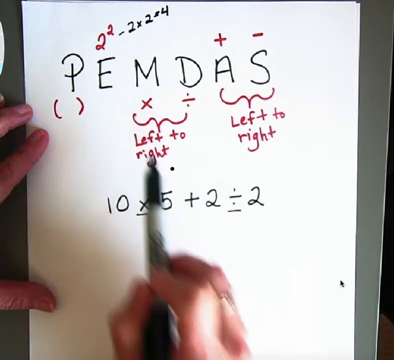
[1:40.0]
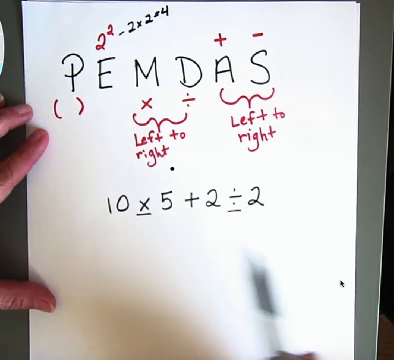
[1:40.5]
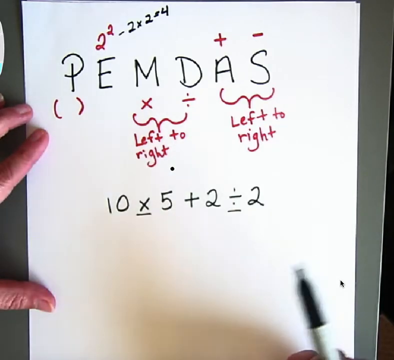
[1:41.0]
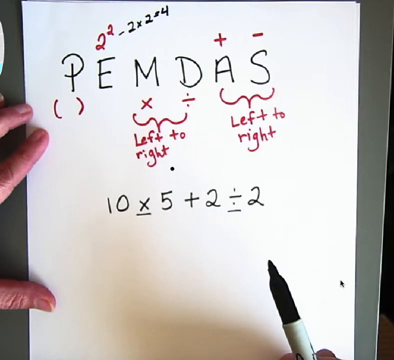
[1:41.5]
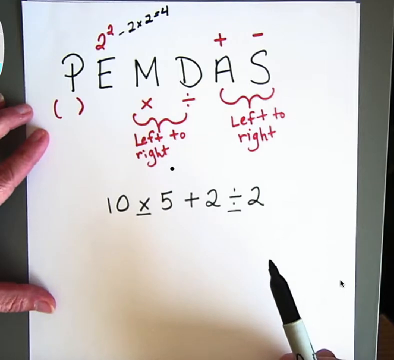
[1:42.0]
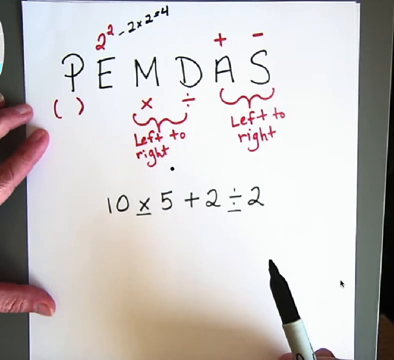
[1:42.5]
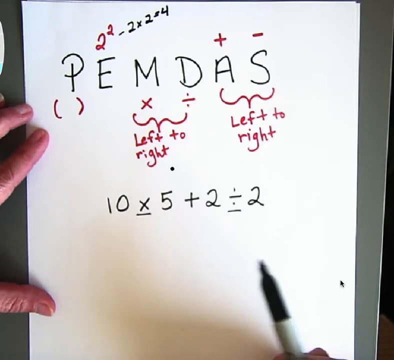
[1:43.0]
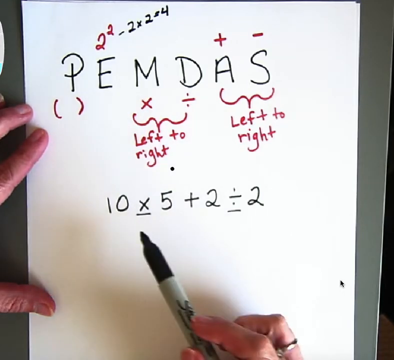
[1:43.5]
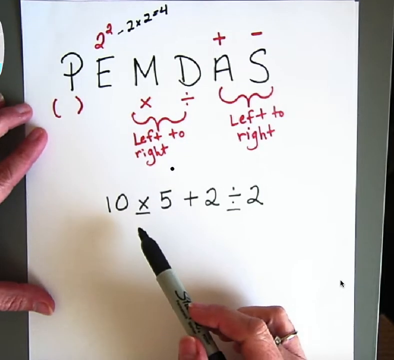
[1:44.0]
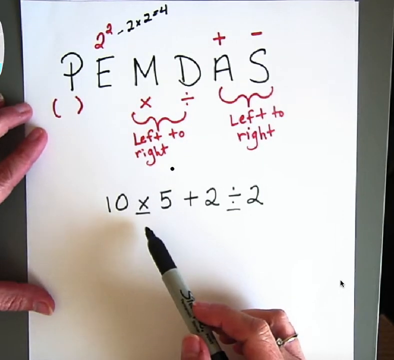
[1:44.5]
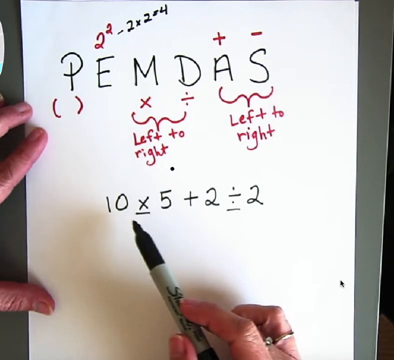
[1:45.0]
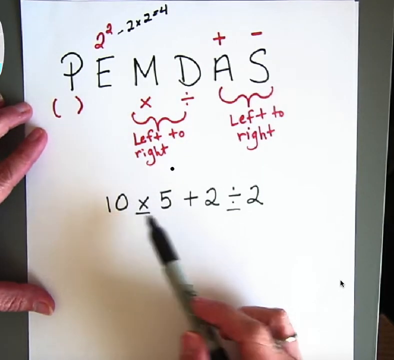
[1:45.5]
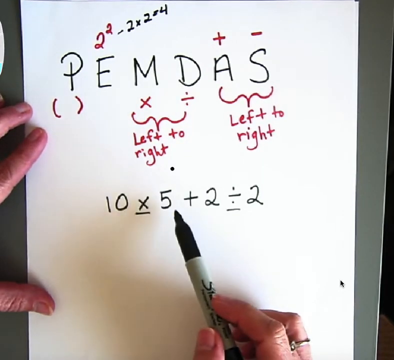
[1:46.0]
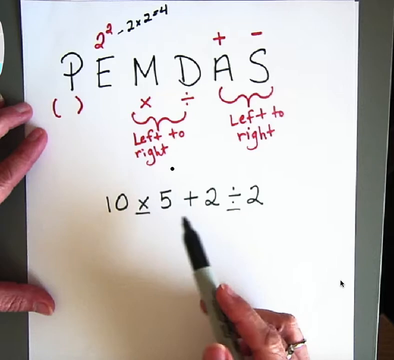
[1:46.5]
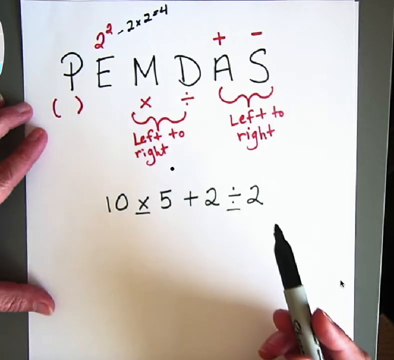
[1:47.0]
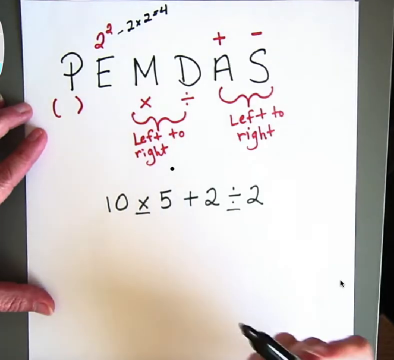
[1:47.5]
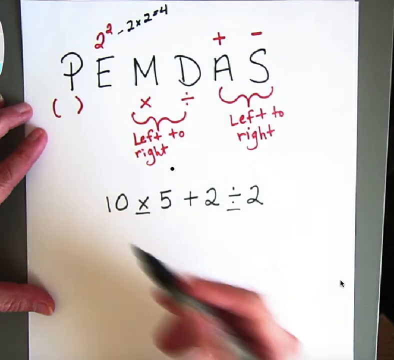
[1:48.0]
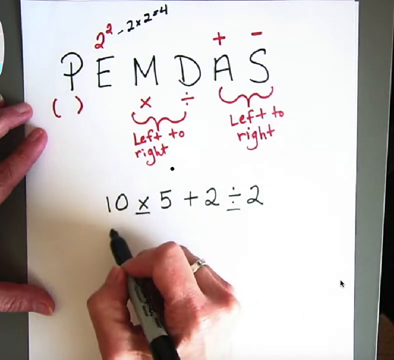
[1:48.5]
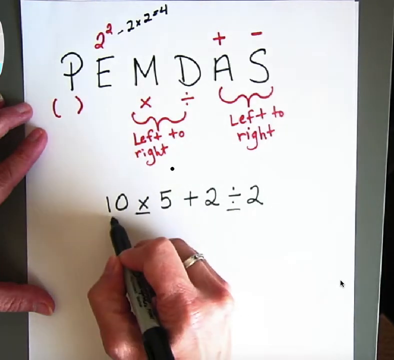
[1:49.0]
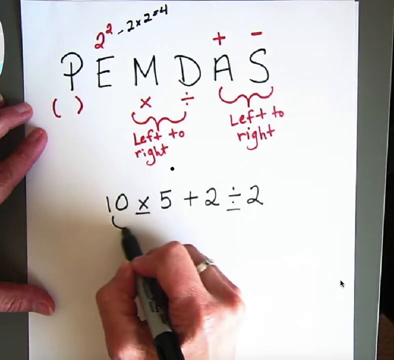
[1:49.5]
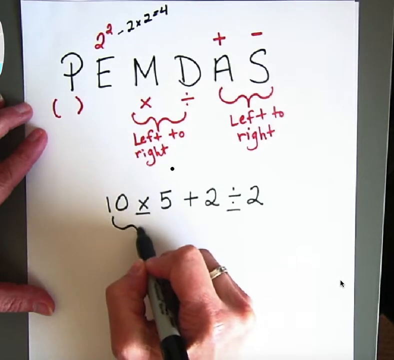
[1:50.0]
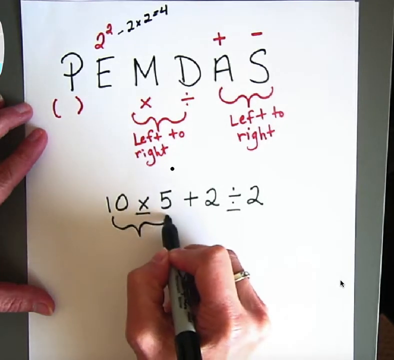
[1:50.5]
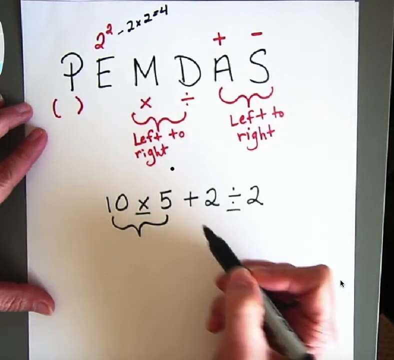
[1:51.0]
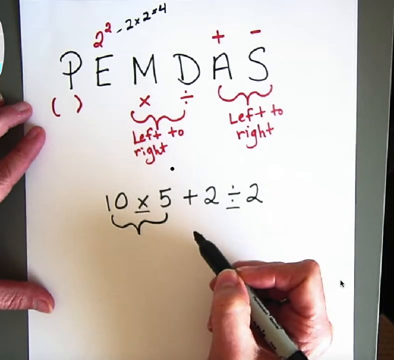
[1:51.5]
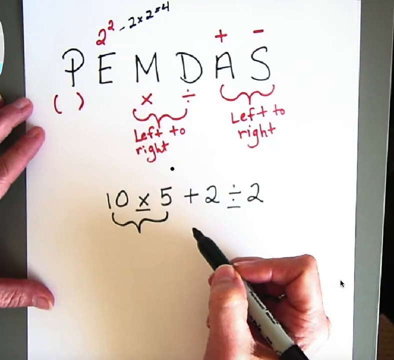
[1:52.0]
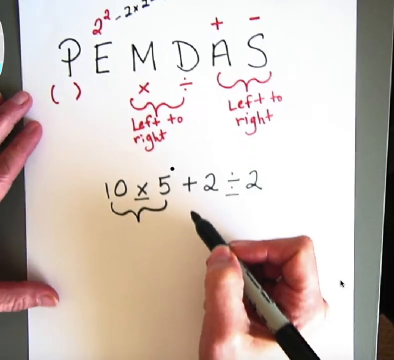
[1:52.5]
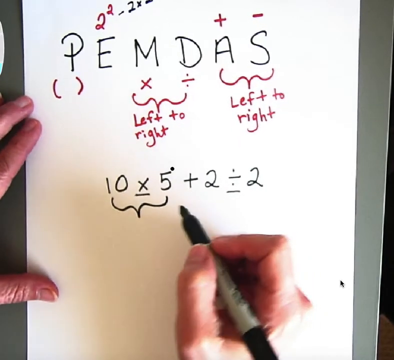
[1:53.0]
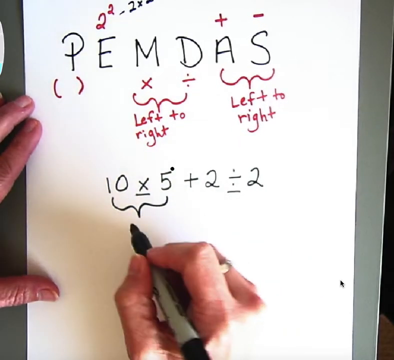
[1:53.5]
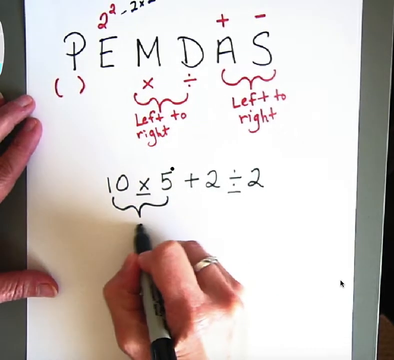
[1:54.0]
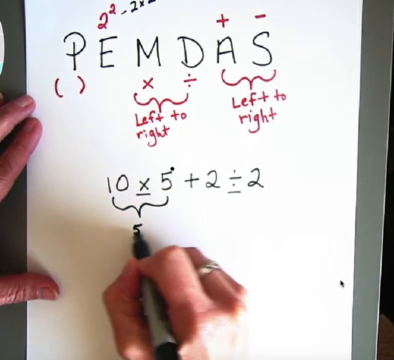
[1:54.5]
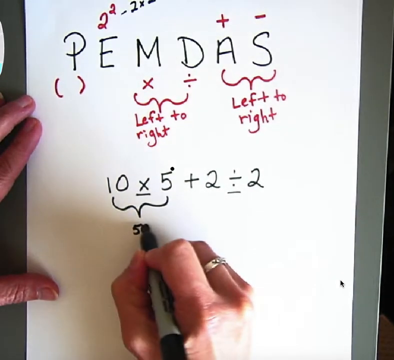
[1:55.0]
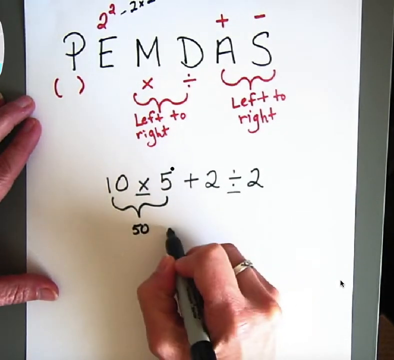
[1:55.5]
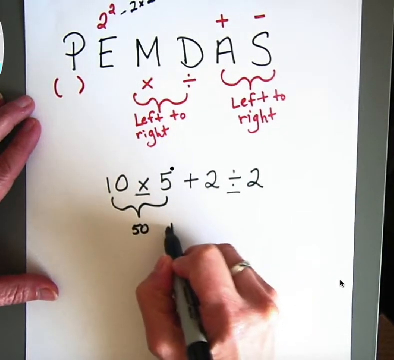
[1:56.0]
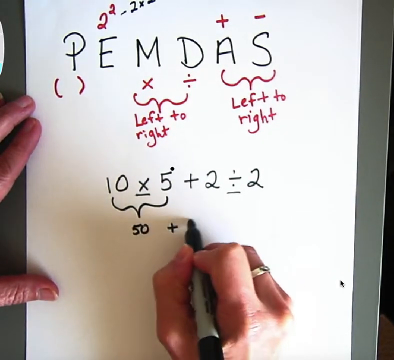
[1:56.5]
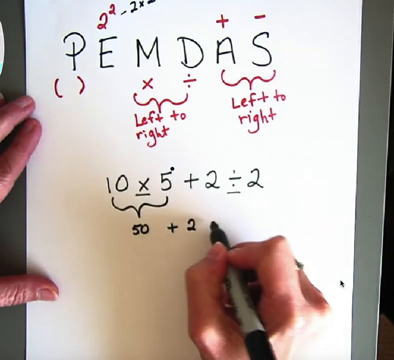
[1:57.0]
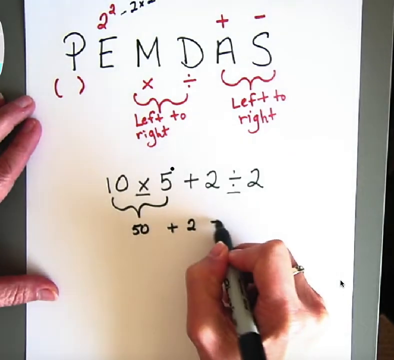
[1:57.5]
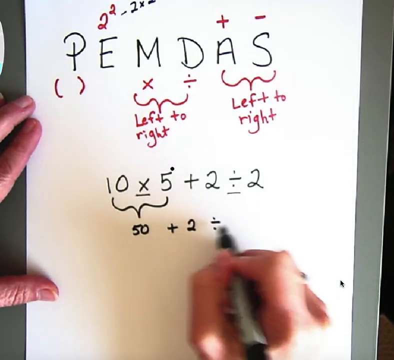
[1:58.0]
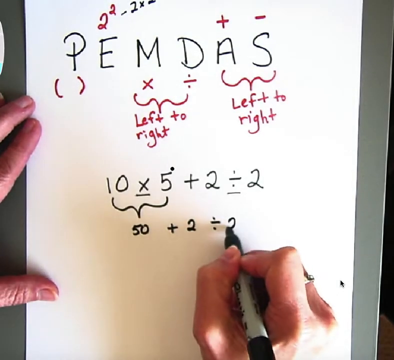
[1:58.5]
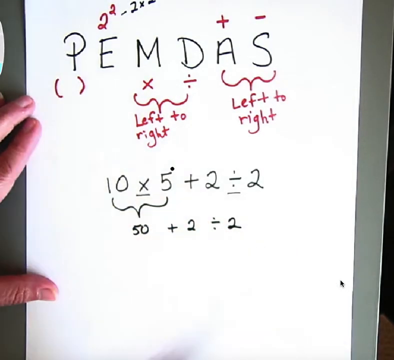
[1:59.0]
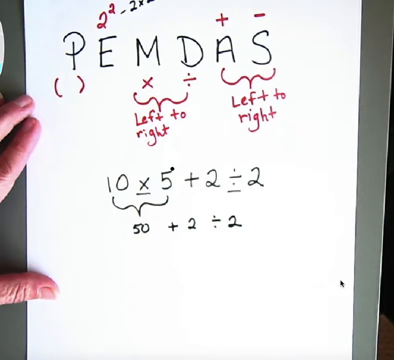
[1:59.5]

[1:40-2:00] A white piece of paper has "PEMDAS" written in black ink in capital letters spaced apart from each other. Under the P is a red parenthesis, under the M an X, and under the D a division sign. Above the A is a plus sign and above the S a minus sign, all written in red. Above the E is a red 2 to the 2nd power, followed in black by a minus sign, 2 times 2 equals 4. A squiggly line under the multiplication sign and division sign under the M and D leads to the statement "left to right", and a squiggly sign under the A and S leads to "left to right". At the bottom is a formula, 10 times 5 plus 2 divided by 2. The person points to the formula, writes a squiggly line under the 10 times 5, writes 50, and points to the 50 plus 2 divided by 2 written in black.